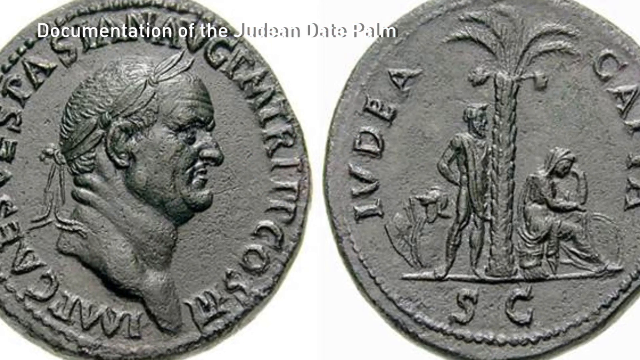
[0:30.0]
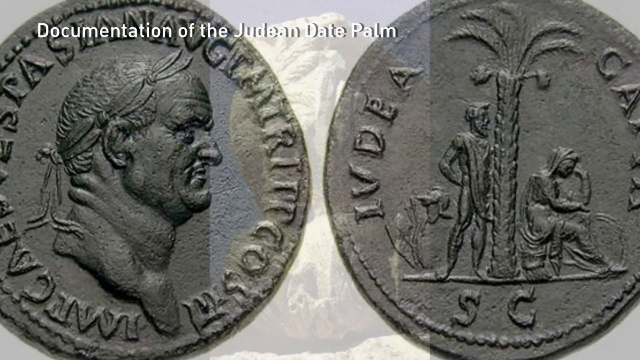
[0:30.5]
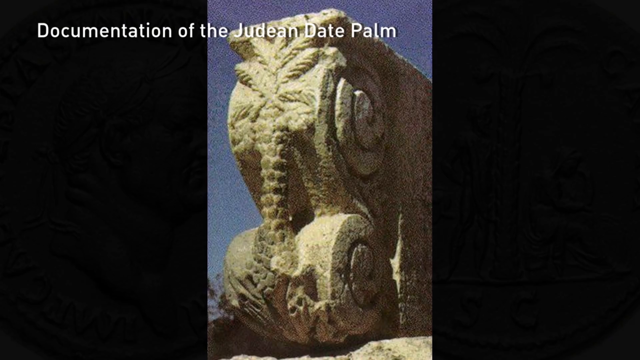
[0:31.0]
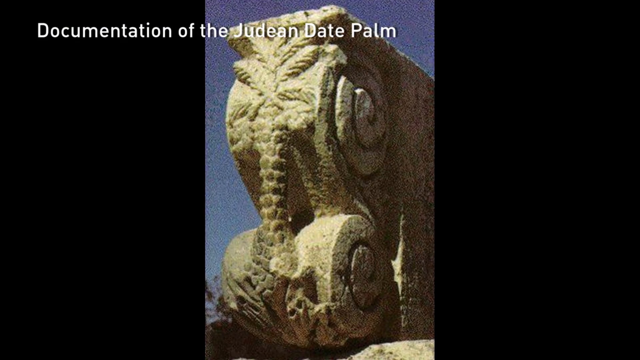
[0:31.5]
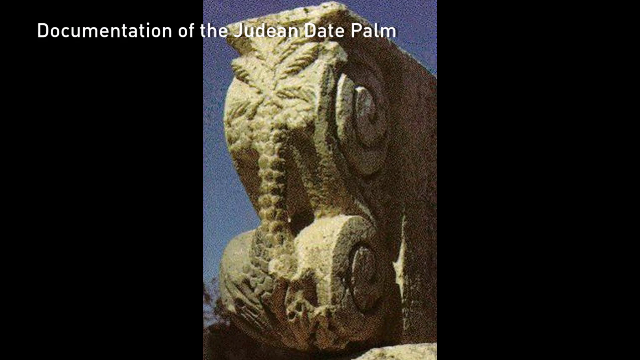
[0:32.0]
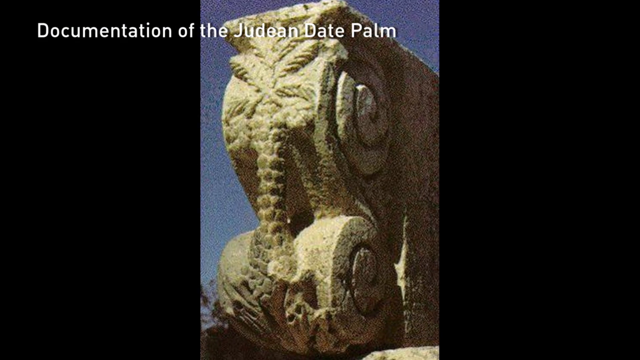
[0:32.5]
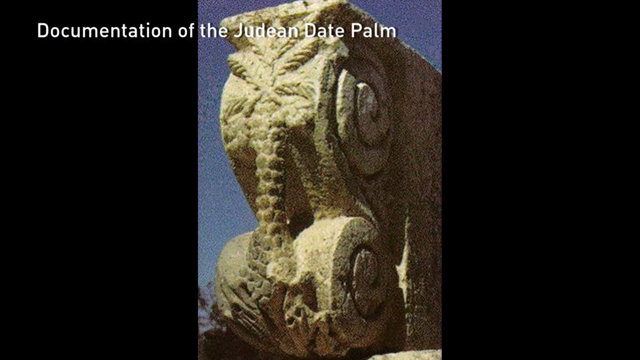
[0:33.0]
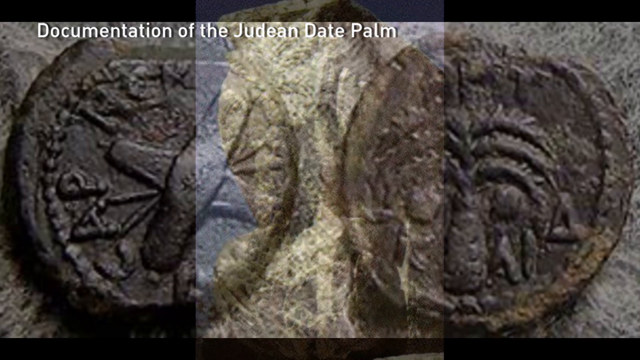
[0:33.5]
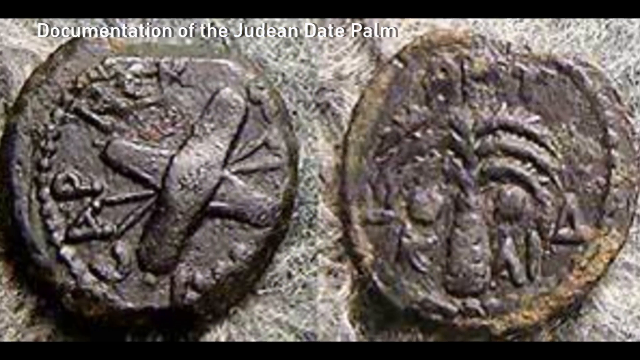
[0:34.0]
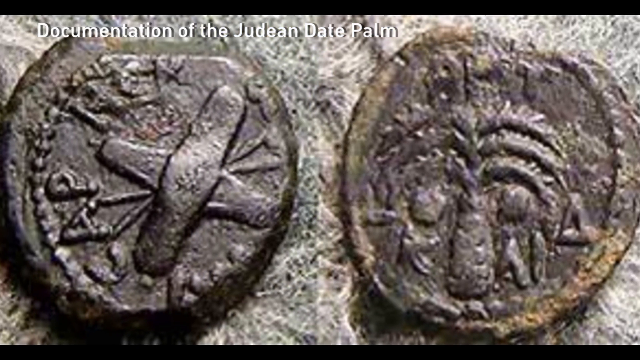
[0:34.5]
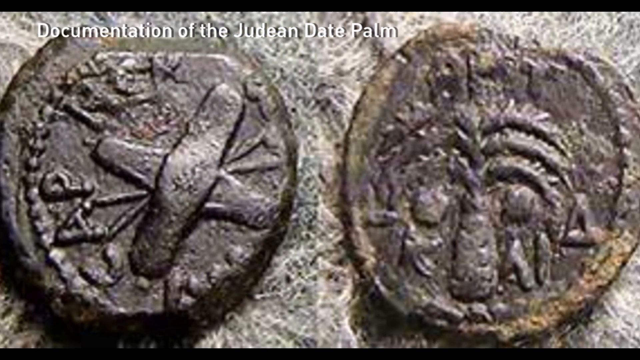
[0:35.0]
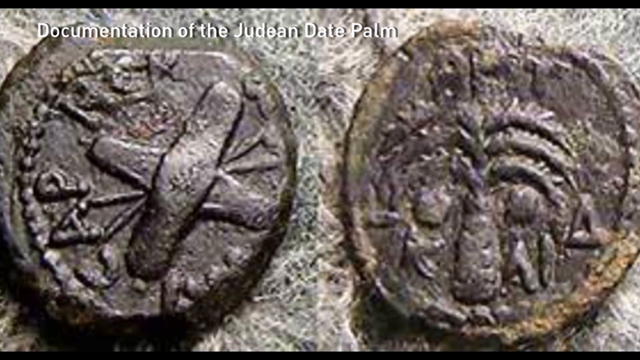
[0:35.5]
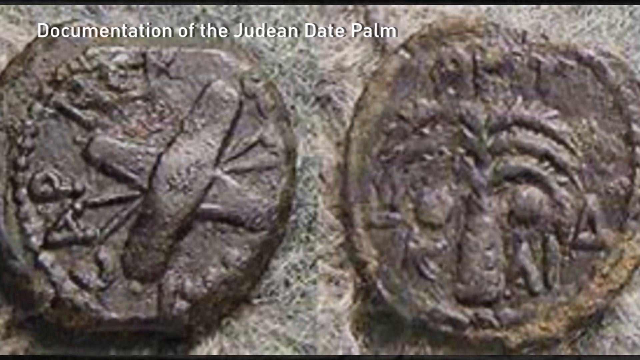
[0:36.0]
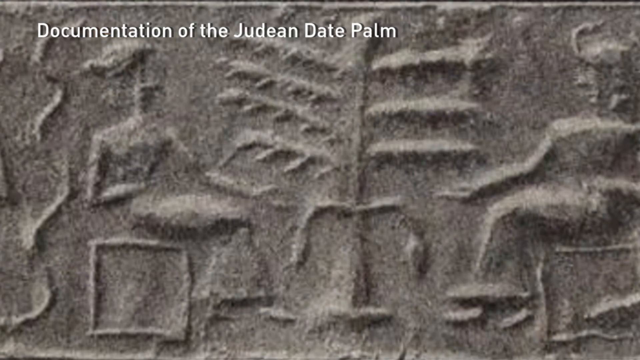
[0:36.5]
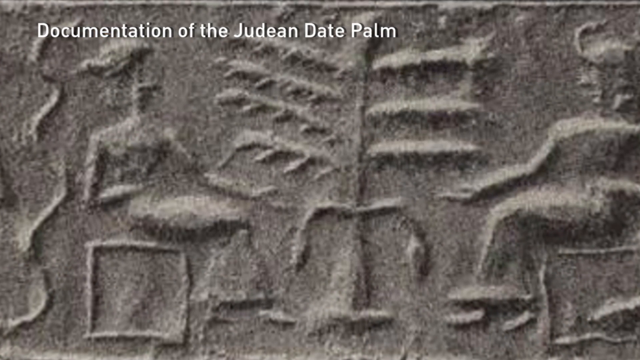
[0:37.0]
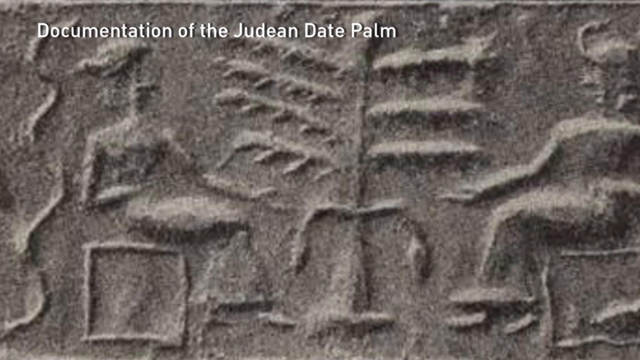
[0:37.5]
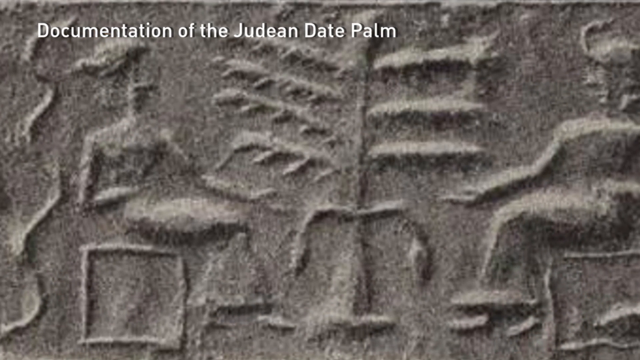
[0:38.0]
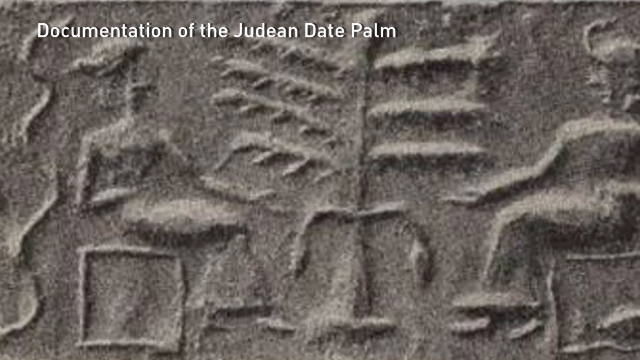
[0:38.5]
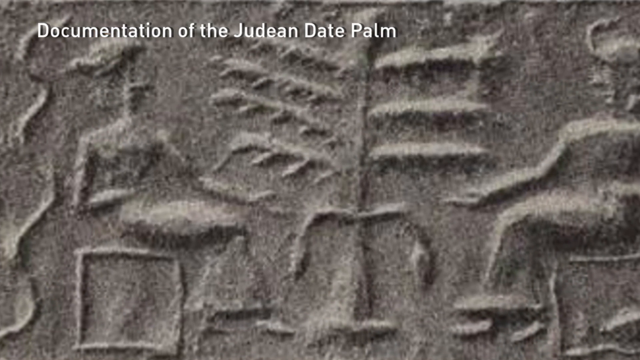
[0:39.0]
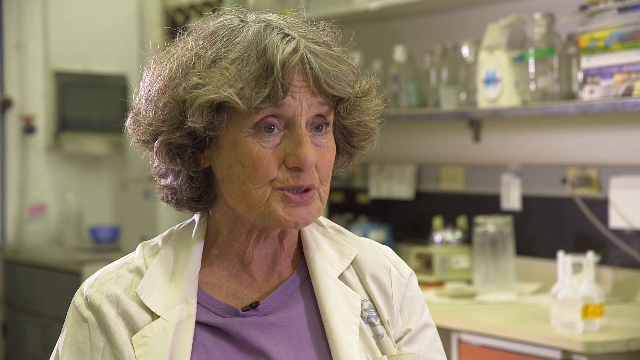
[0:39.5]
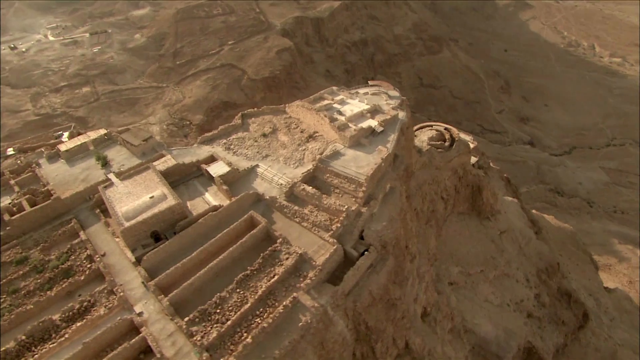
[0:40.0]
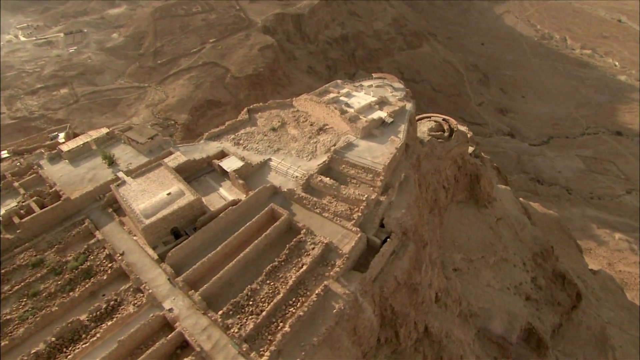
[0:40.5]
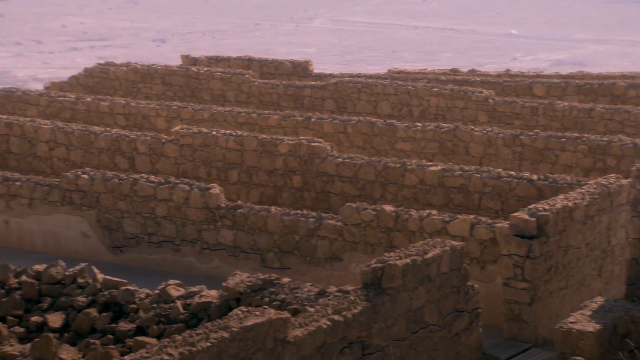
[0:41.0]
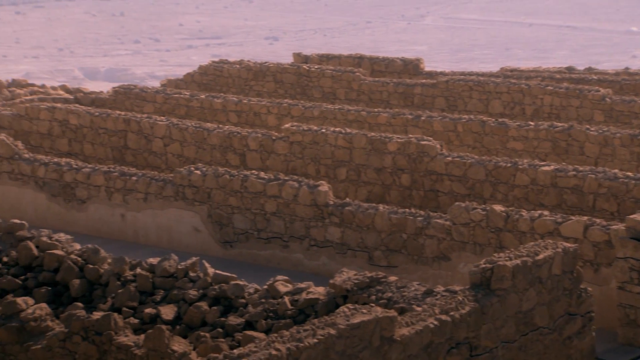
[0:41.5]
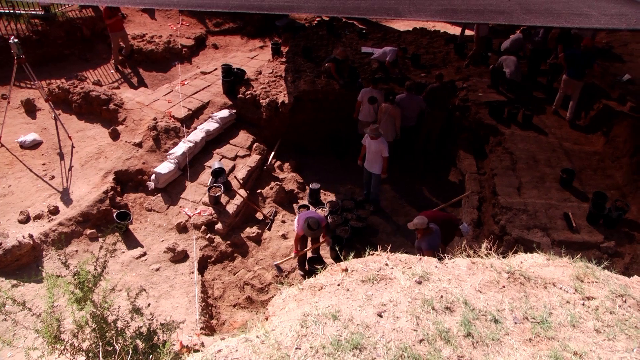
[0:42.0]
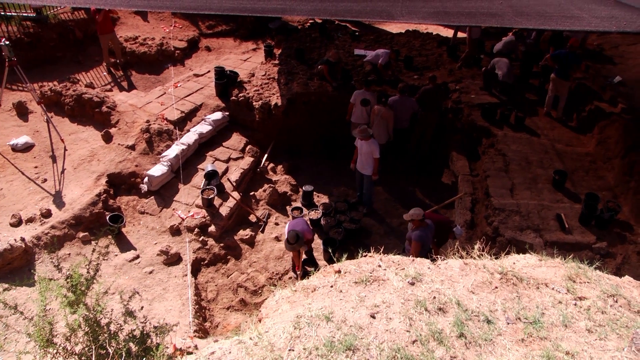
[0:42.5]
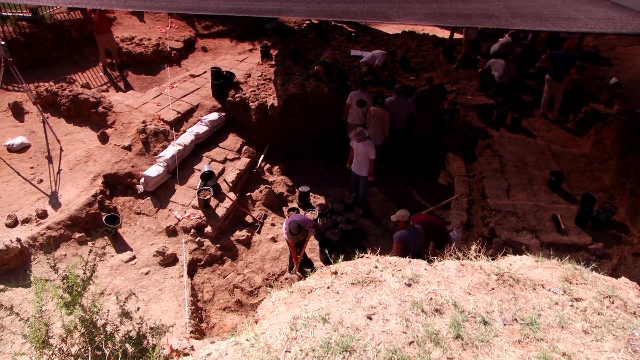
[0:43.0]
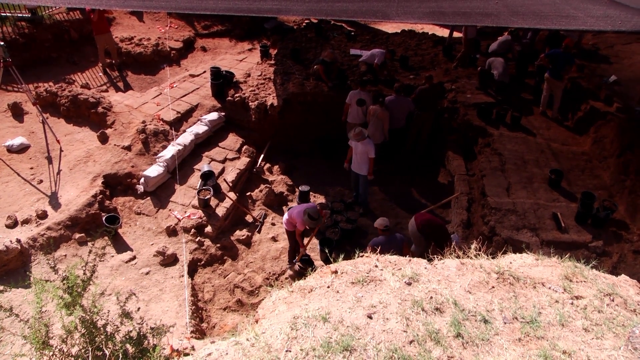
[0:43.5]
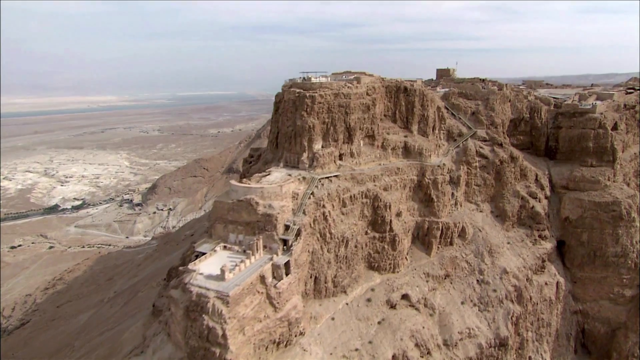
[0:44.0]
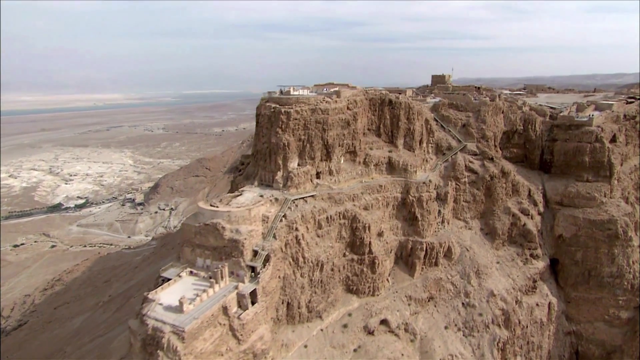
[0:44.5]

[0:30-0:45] The video shifts between different kinds of currency that look like old Roman currency. It then moves to a picture of a plateau with people digging up a buried city, possibly something like Pompeii, and then back to the people talking about it. An overview of the plateau is shown, along with depictions of the tree on the coins: the Judean date palm, which is being brought back to life. The video shifts back and forth between three images: an old broken wall, the plateau, and the damaged, buried city.